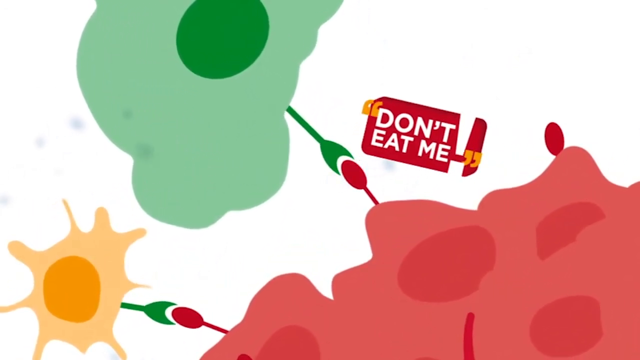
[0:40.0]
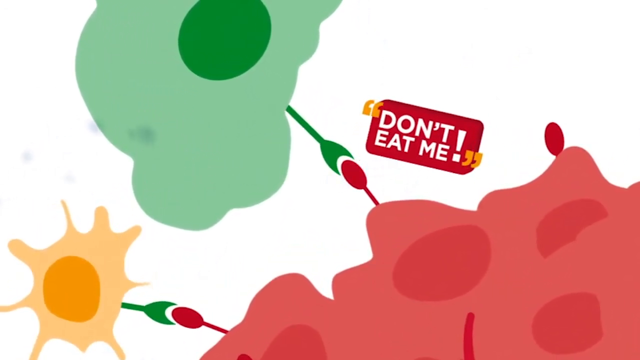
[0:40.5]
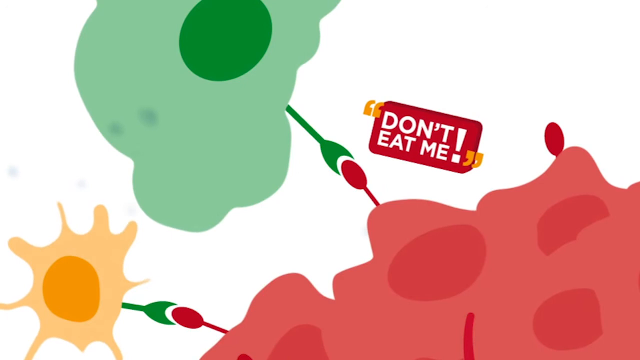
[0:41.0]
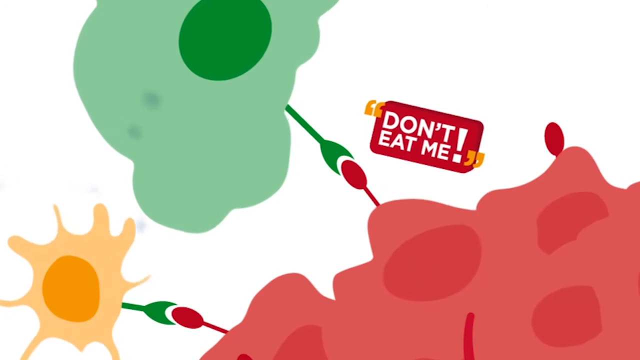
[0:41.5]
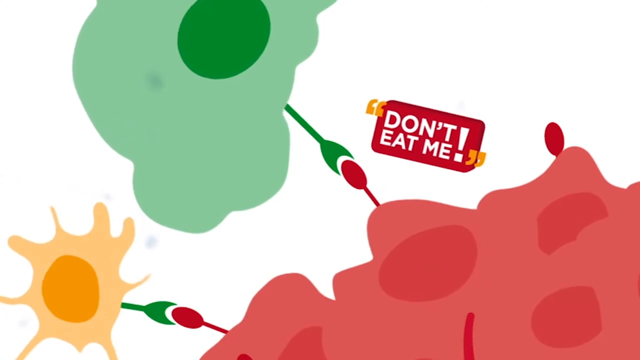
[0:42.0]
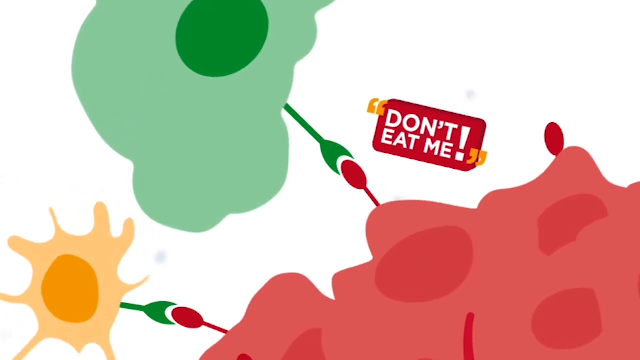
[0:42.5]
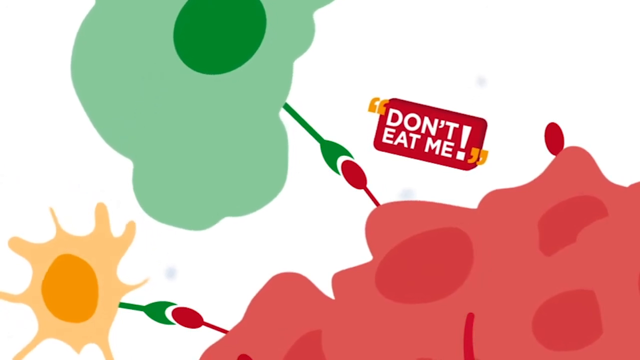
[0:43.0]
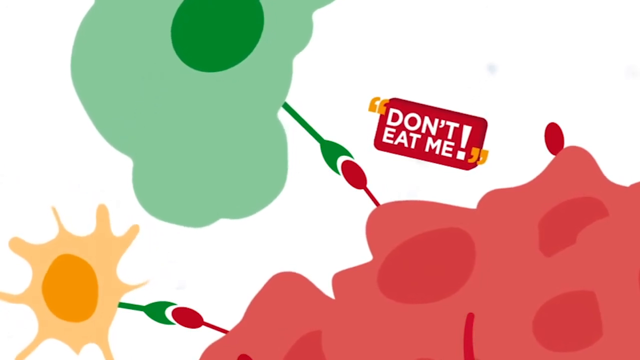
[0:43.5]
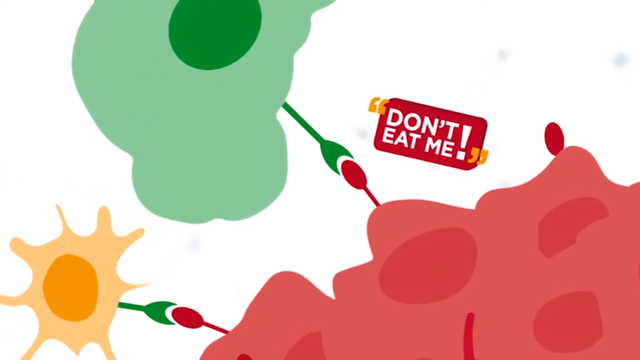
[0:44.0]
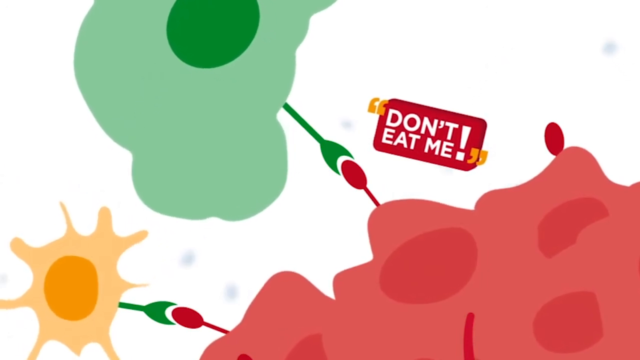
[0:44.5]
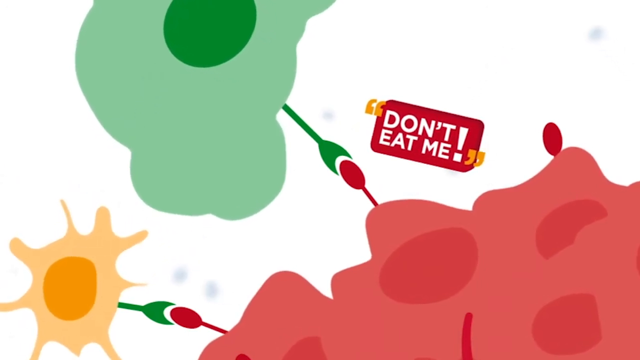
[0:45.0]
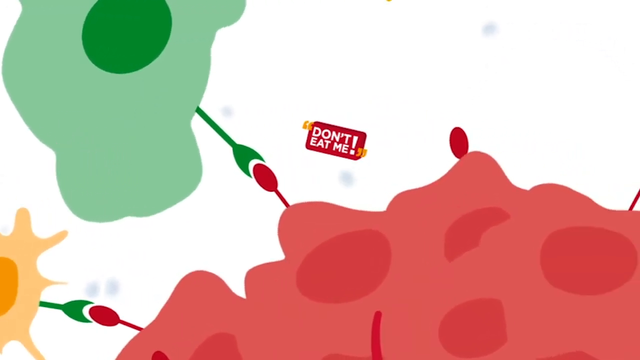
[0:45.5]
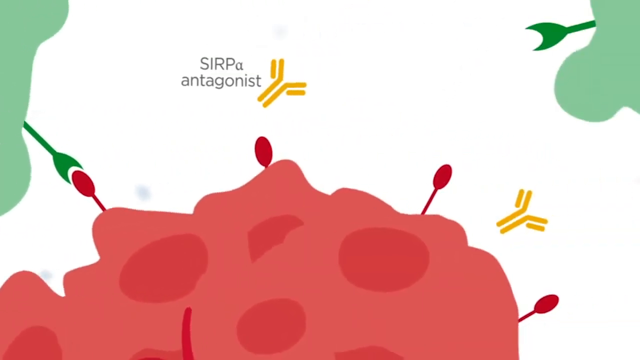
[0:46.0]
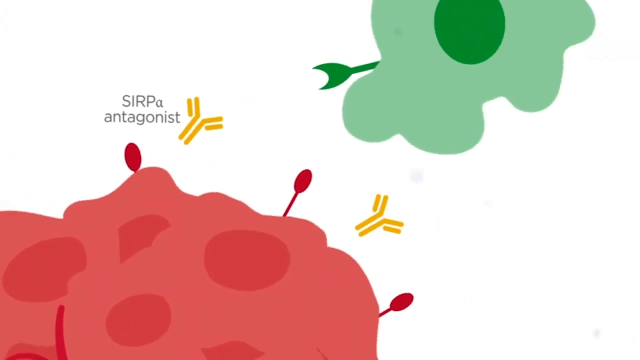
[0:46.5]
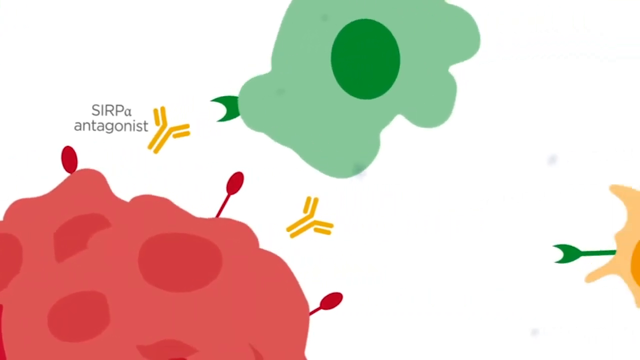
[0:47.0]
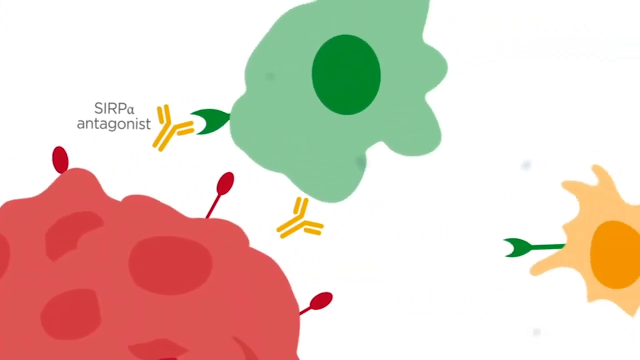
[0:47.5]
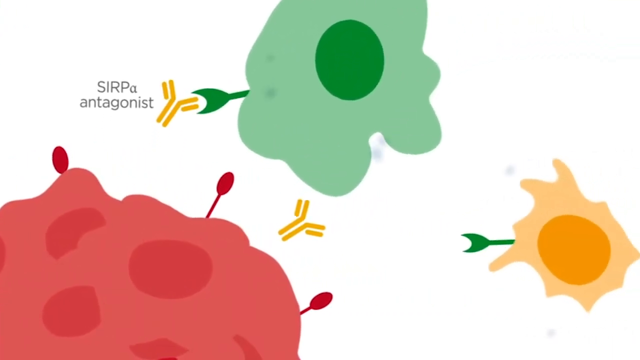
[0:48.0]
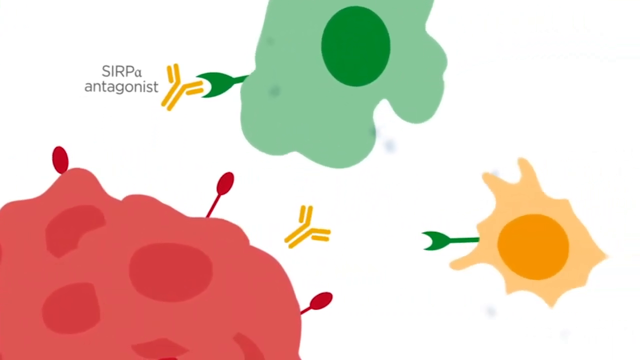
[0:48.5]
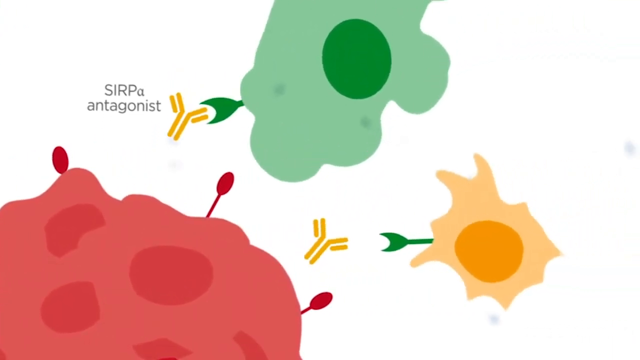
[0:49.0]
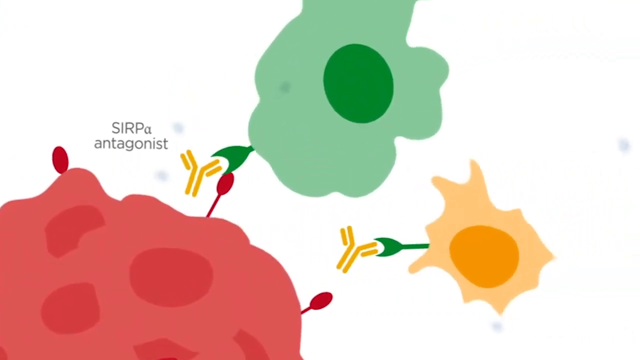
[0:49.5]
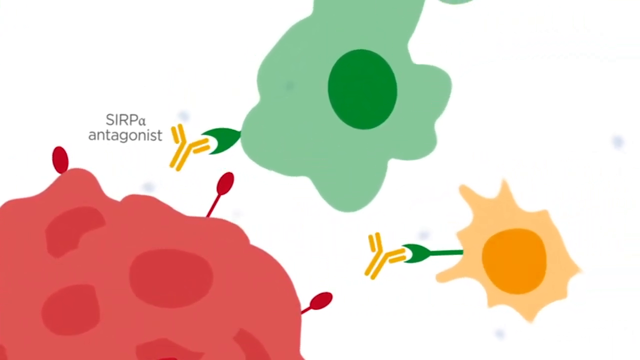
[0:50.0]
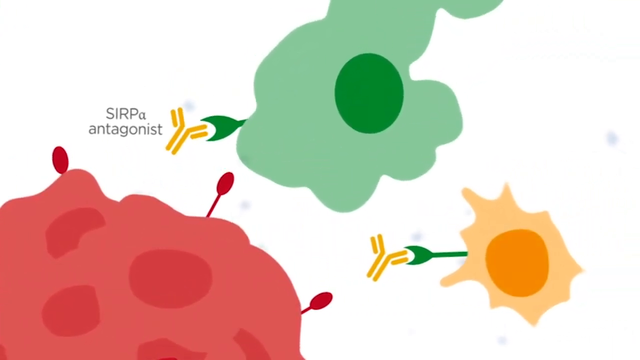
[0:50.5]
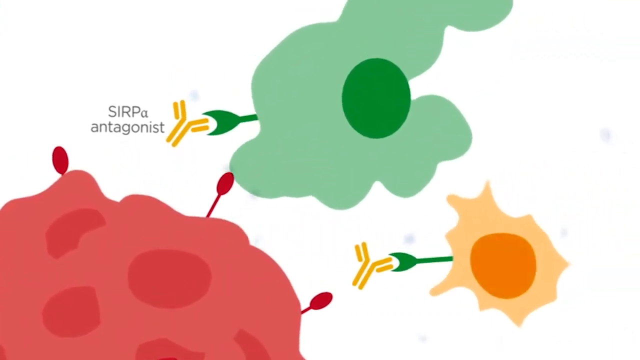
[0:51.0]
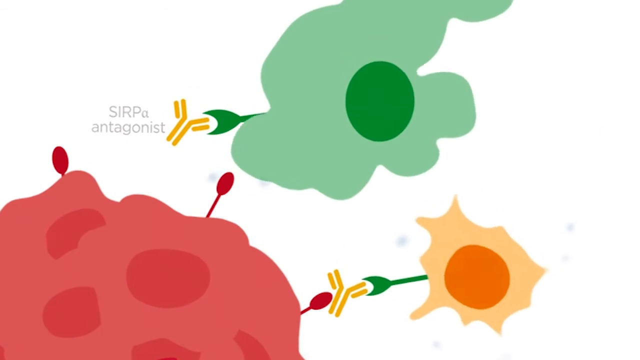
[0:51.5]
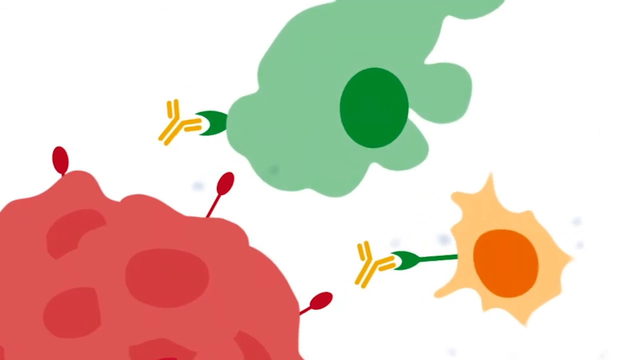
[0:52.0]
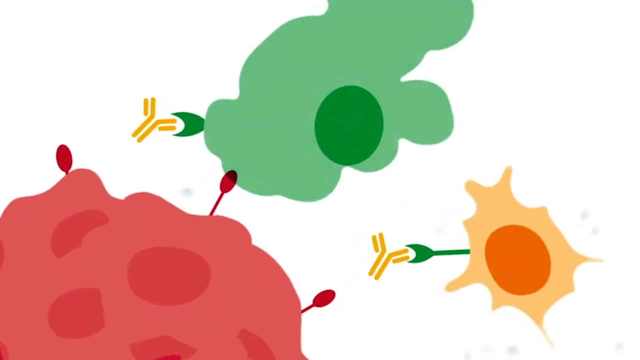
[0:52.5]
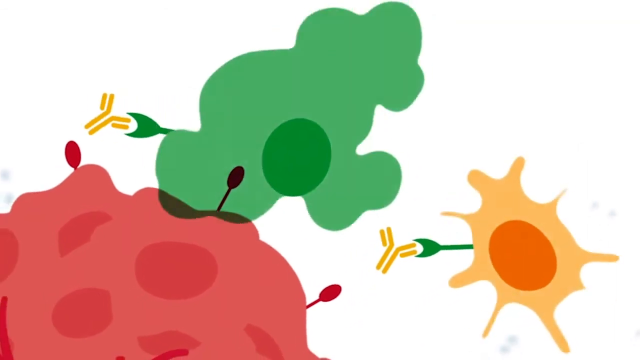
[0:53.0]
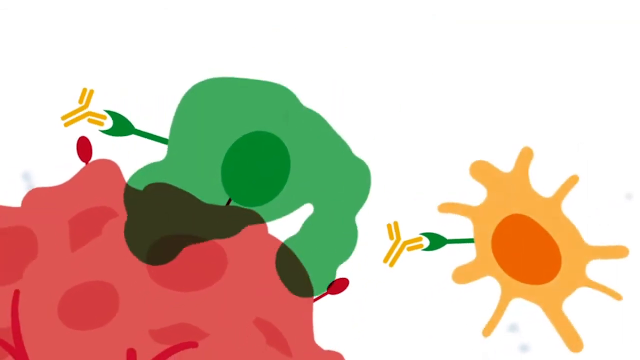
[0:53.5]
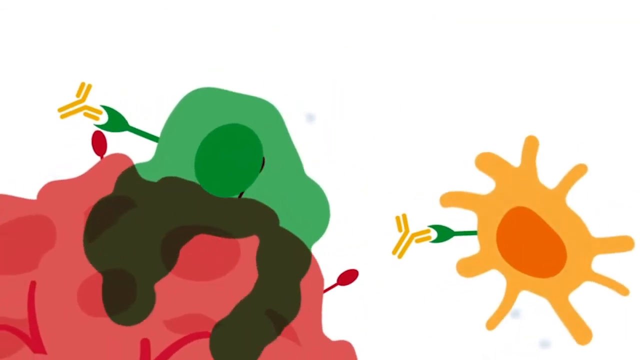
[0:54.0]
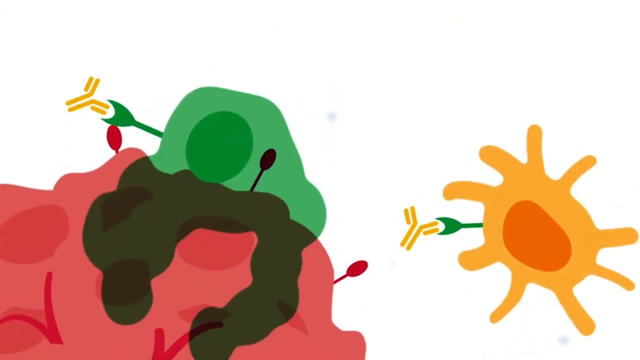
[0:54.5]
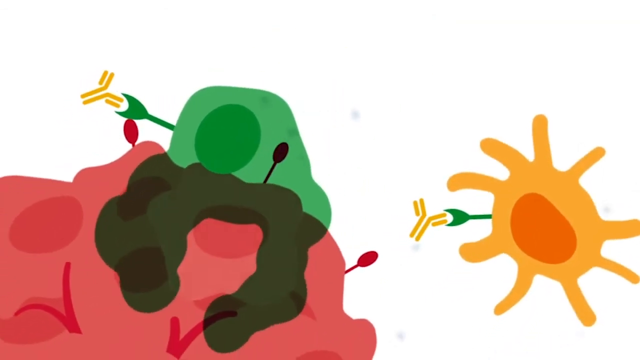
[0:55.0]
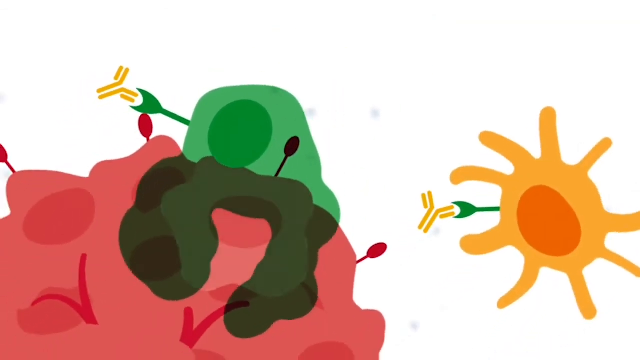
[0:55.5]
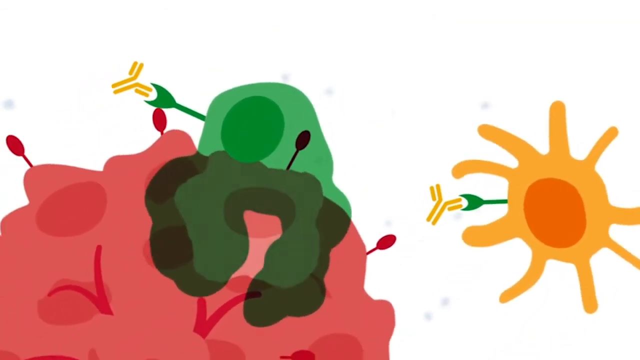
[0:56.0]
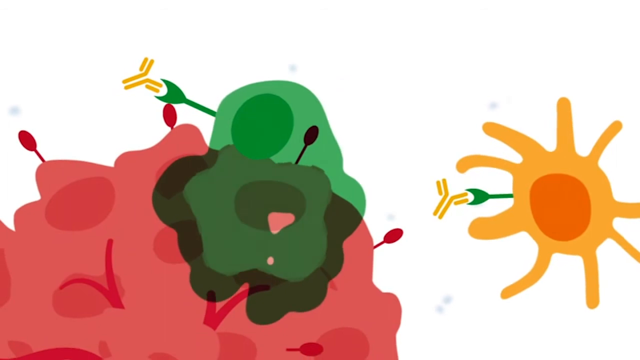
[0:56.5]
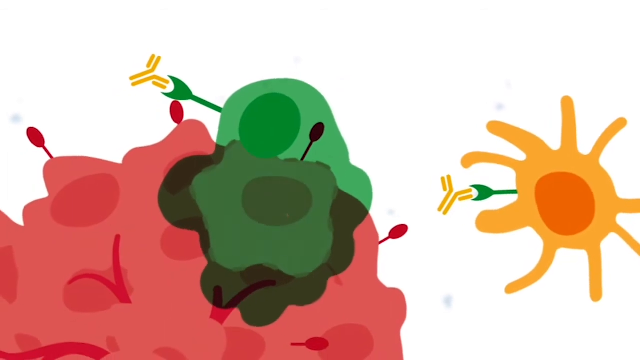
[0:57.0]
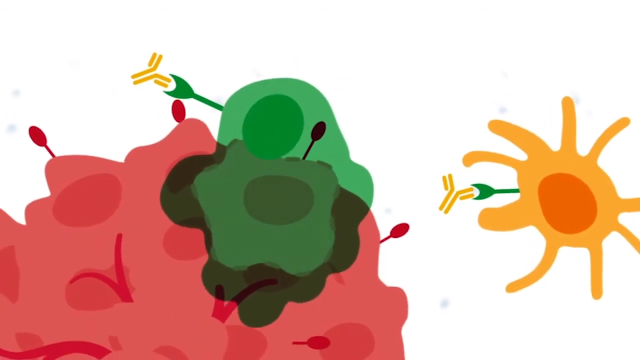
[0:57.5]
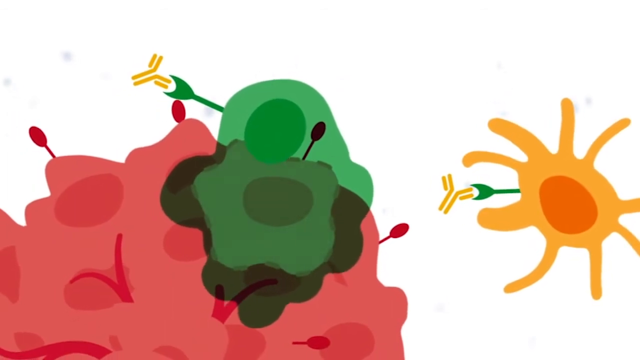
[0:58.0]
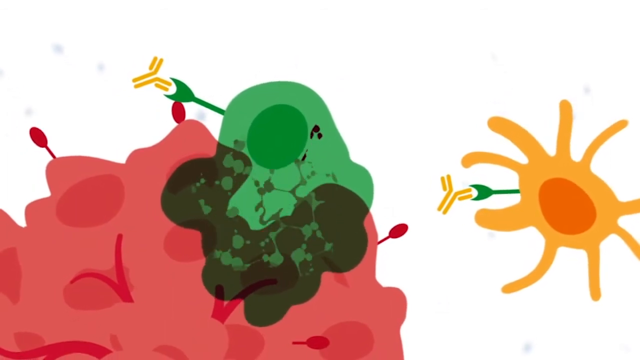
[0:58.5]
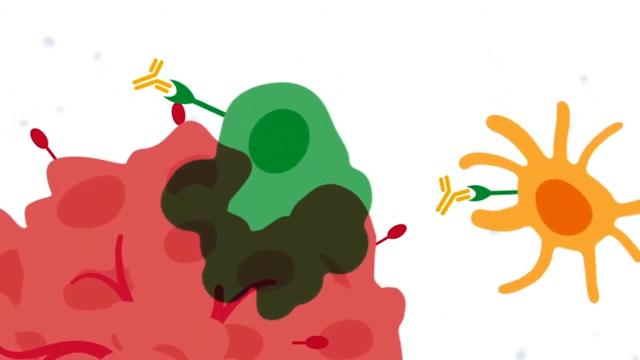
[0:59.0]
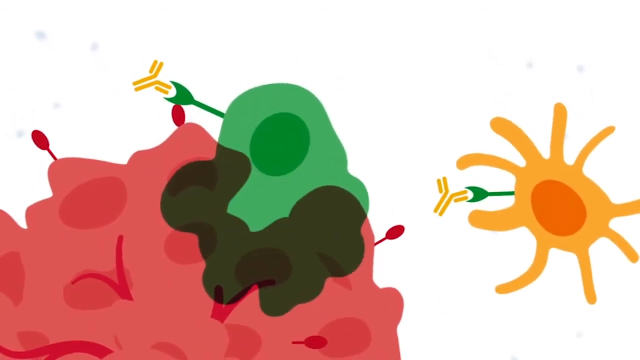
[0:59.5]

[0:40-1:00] "Don't eat me" is shown. There is an enlarged tumor, and other cells try to eat it while the tumor asks not to be eaten. The SARPA antagonist then appears, apparently working to eliminate the tumor and force it to become smaller and vanish.